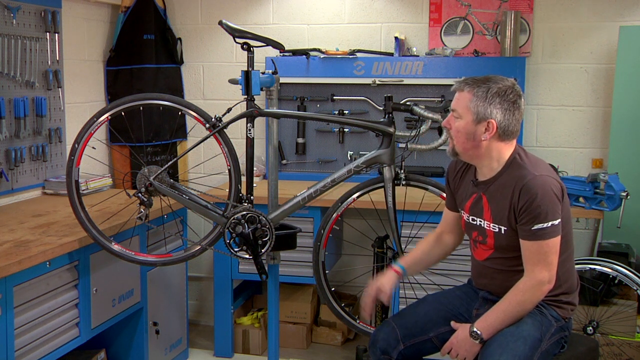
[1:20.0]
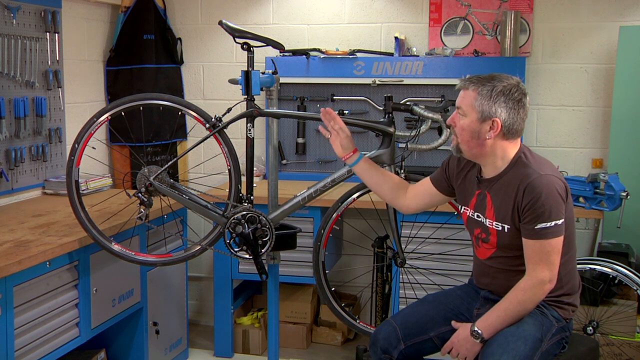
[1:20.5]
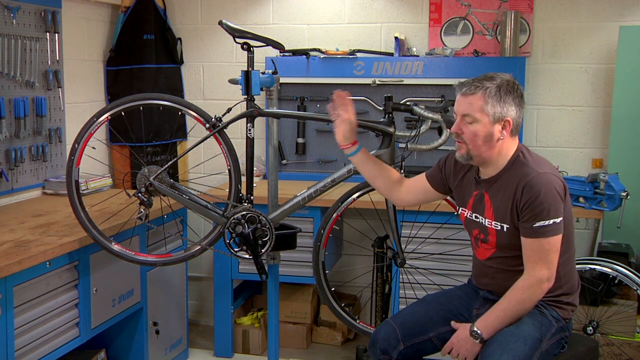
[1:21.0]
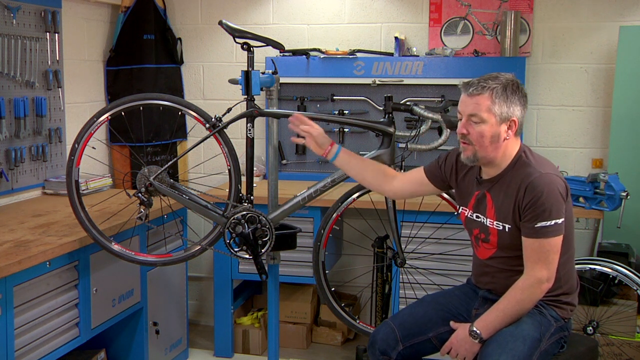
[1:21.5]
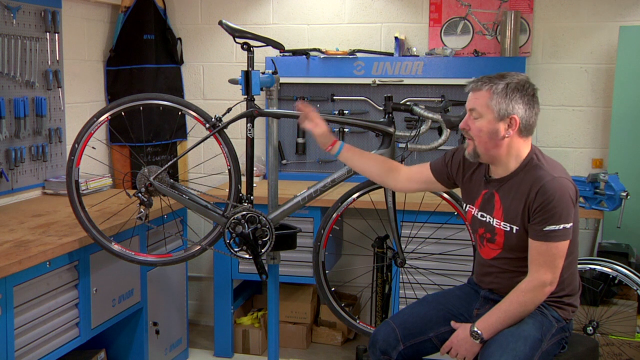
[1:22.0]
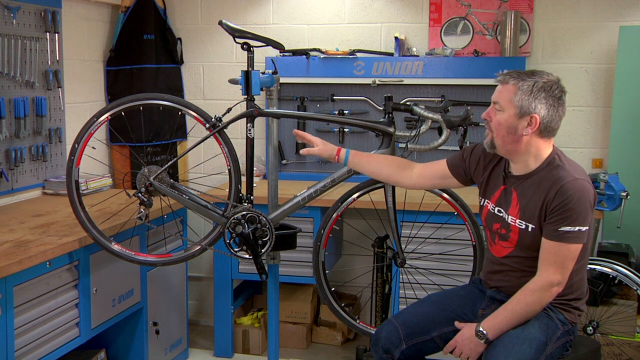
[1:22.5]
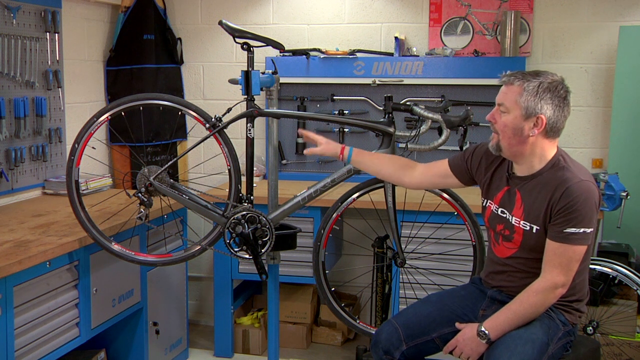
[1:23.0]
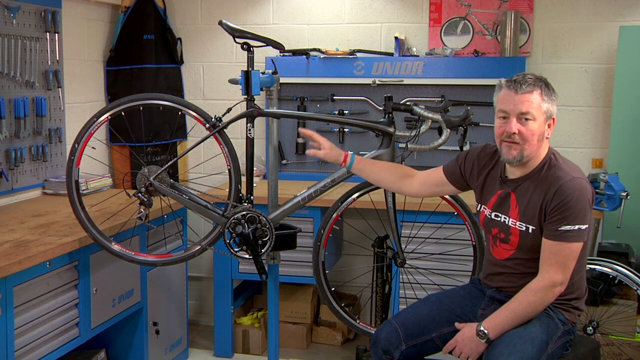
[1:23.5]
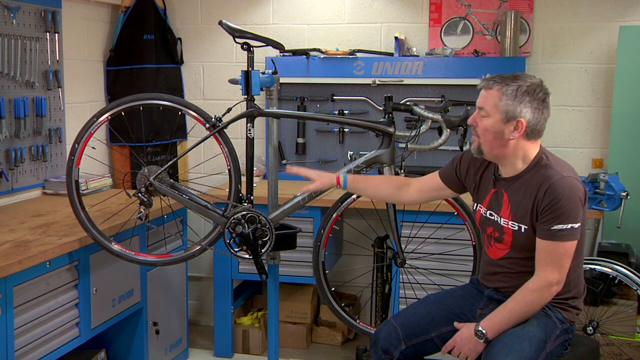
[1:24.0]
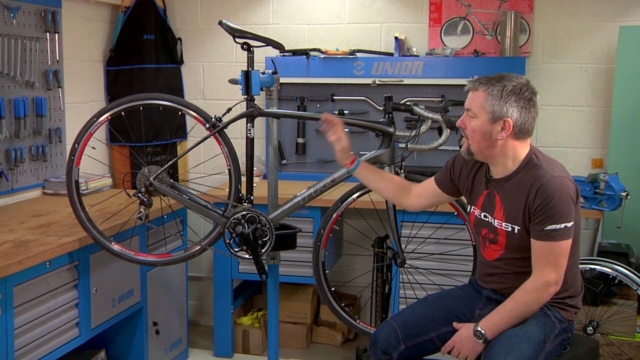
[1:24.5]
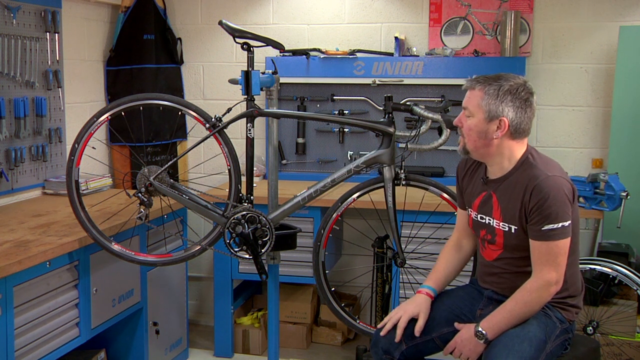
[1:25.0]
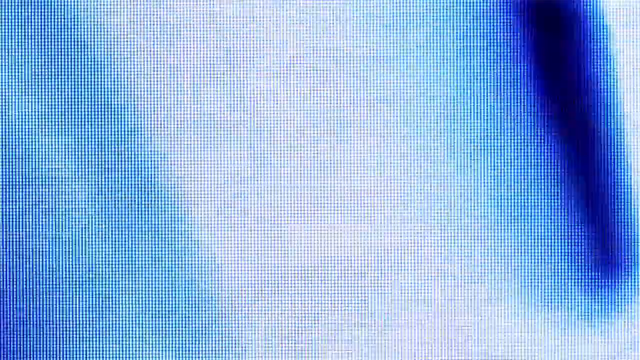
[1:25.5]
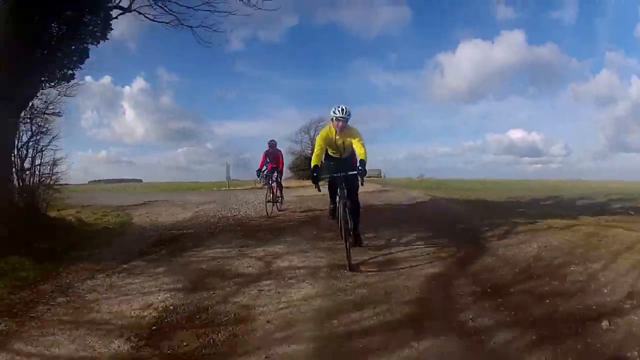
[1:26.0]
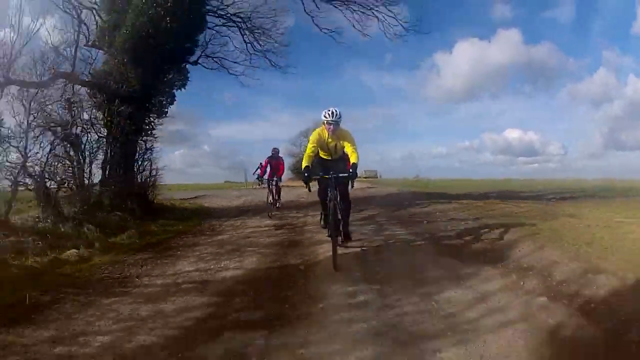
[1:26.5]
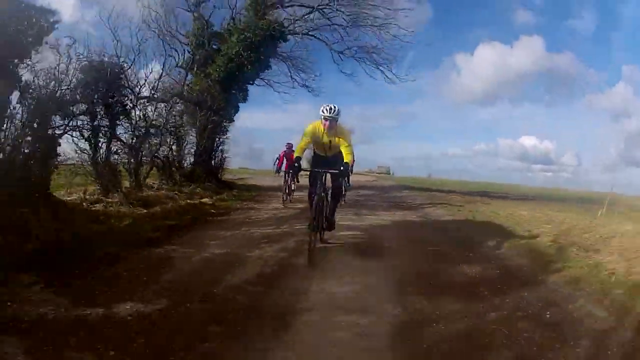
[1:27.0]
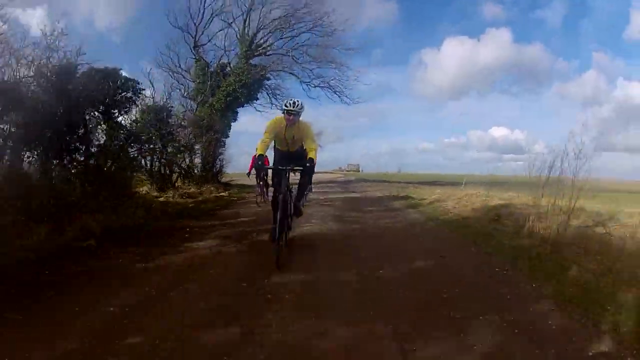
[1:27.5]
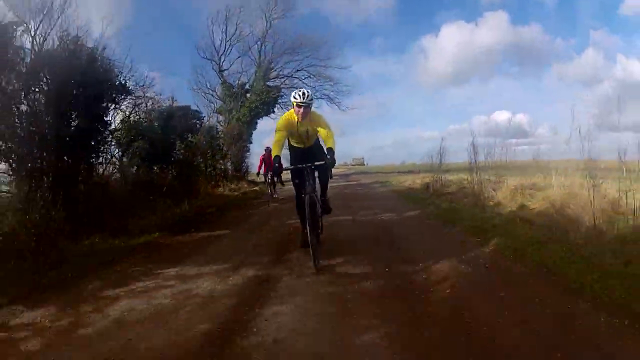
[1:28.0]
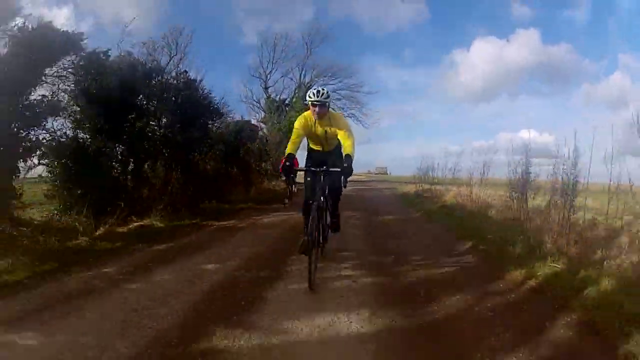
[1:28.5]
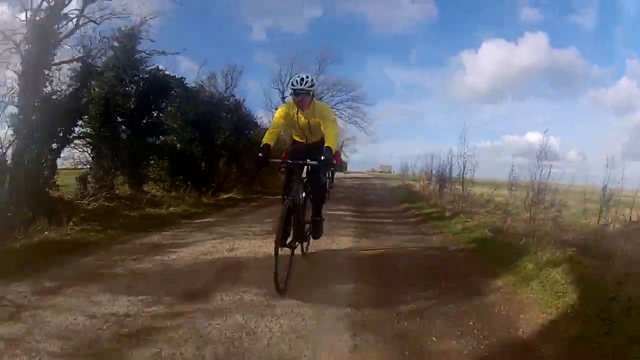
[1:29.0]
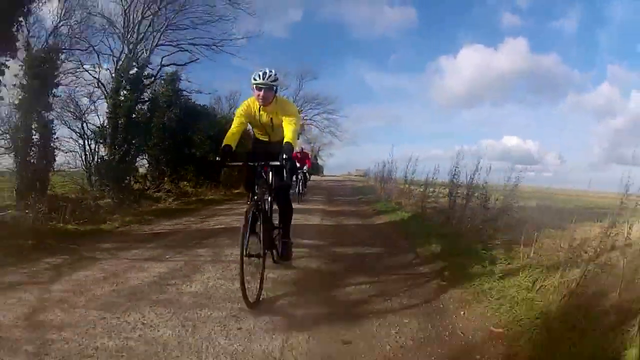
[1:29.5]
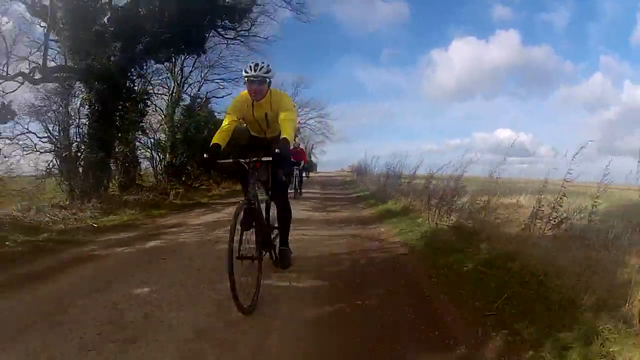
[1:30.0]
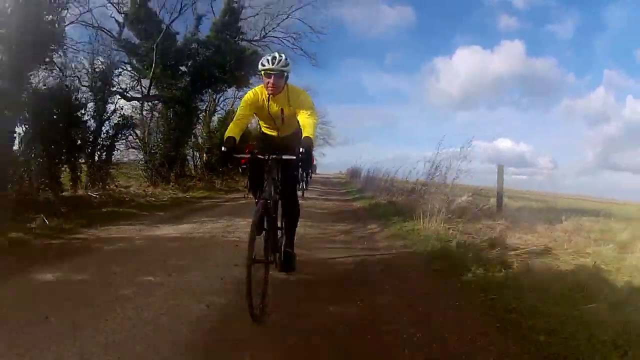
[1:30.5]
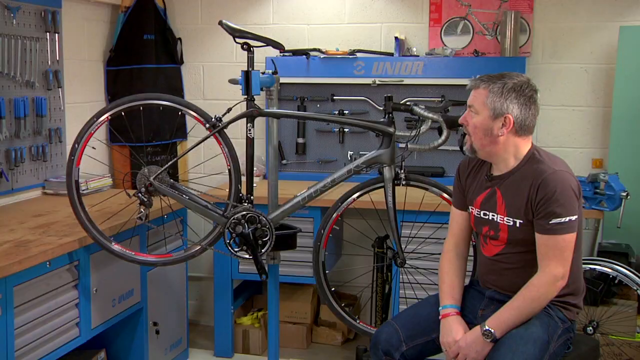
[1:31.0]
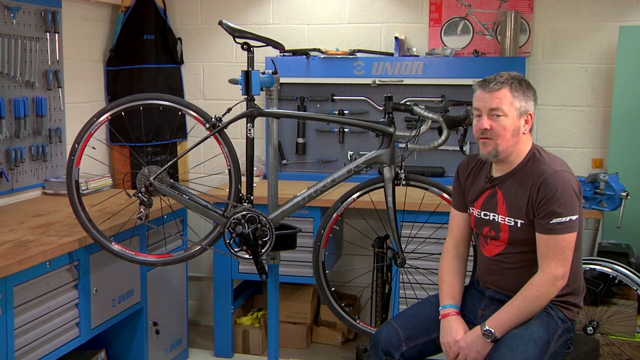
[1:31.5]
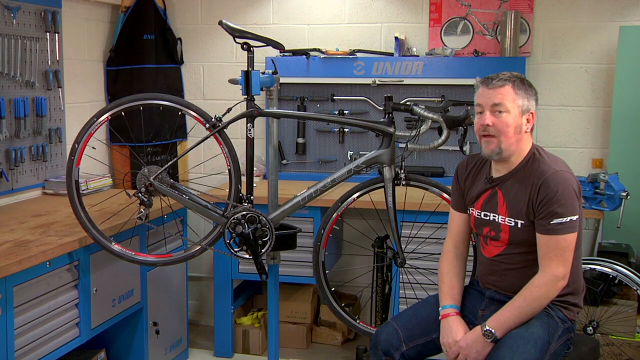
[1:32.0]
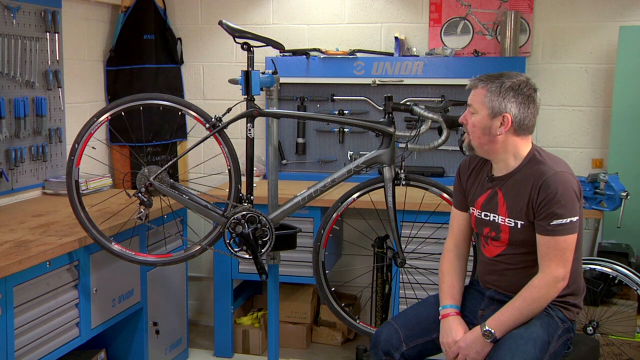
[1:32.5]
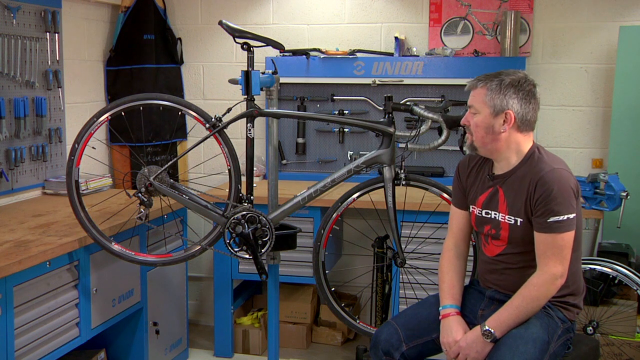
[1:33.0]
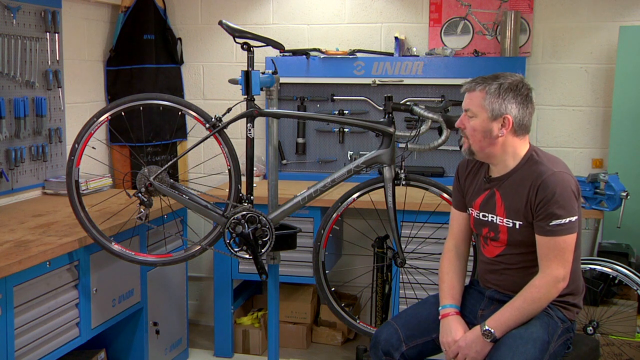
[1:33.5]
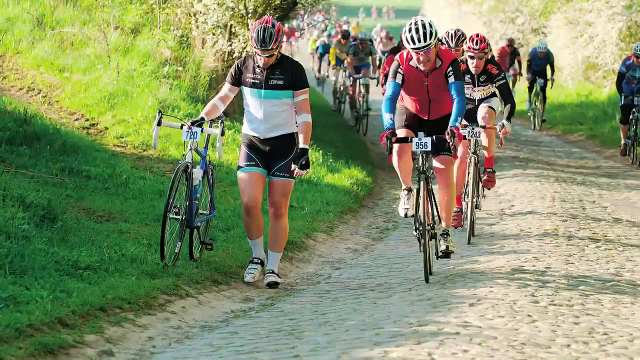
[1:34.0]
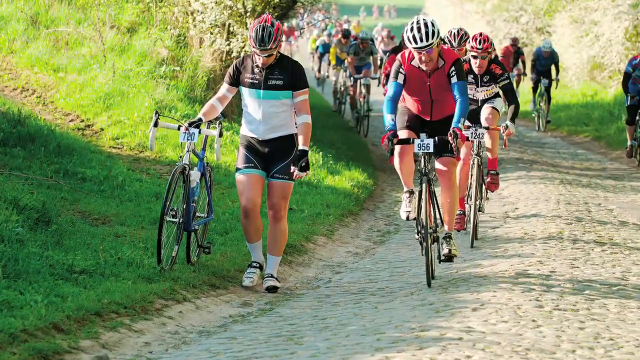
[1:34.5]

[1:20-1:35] In the workshop, the man talks about the gray Trek Domain bike on the stand, pointing to it and motioning around it. He looks at the bike a lot while talking, turning a little toward the camera at times but mostly pointing at and motioning to the bike. The video cuts to footage of three or four people riding their bikes along a dirt track through a fairly open grass field, with some trees on the side of the track. A still image of a bike race follows, with dozens if not more riders wearing bike helmets and racing jerseys, with race bib numbers on themselves and/or their bikes. On the left side of the image, one person walks their bike along the side of the trail.